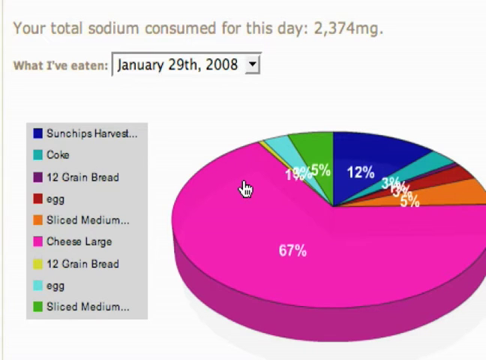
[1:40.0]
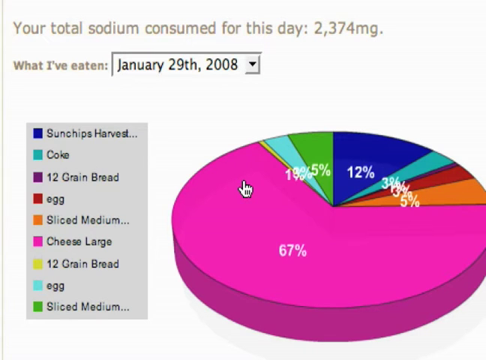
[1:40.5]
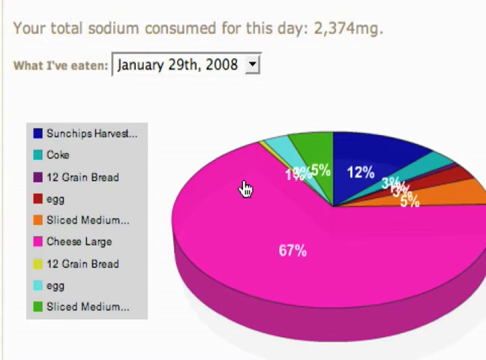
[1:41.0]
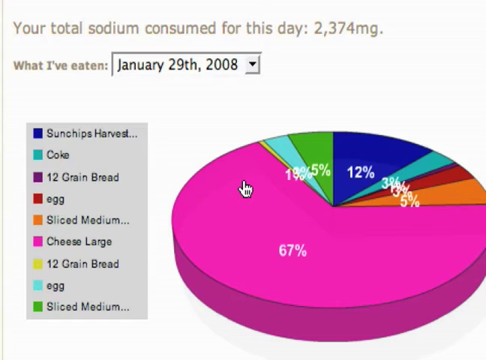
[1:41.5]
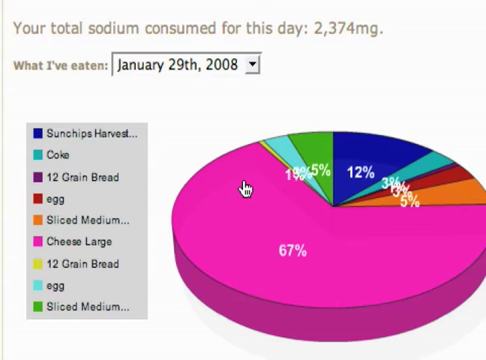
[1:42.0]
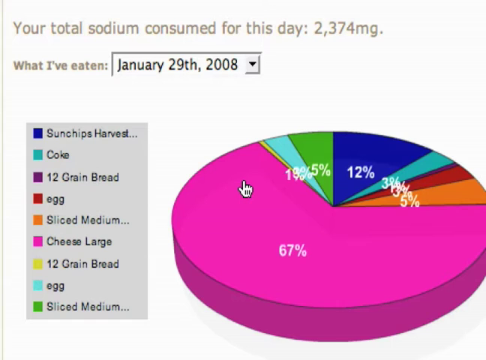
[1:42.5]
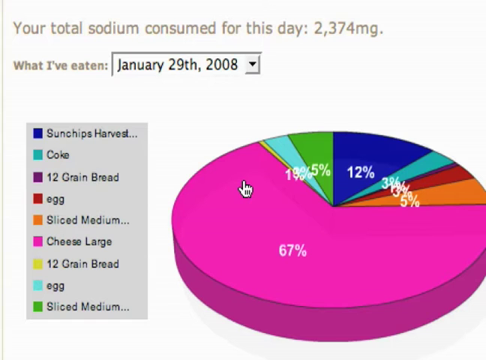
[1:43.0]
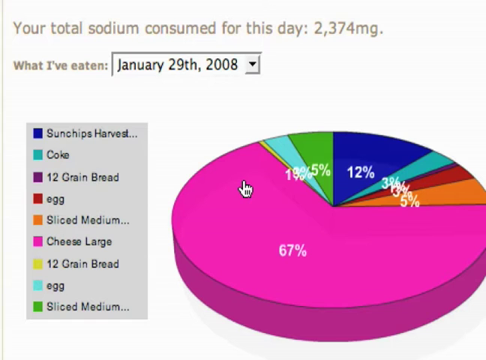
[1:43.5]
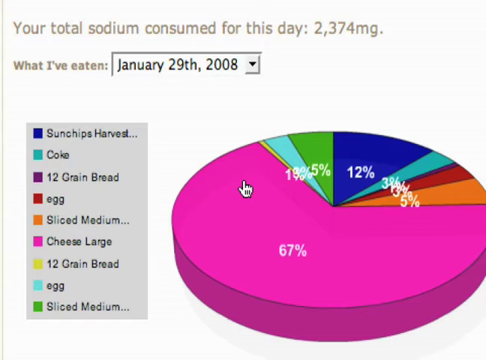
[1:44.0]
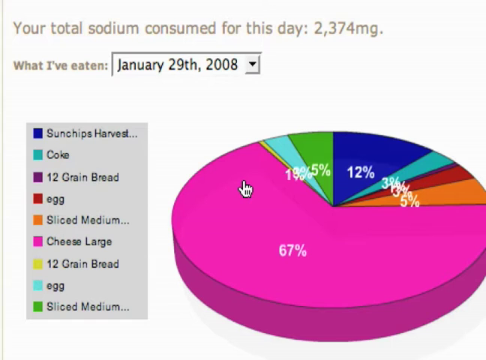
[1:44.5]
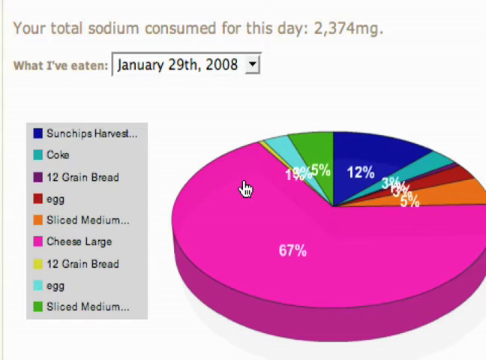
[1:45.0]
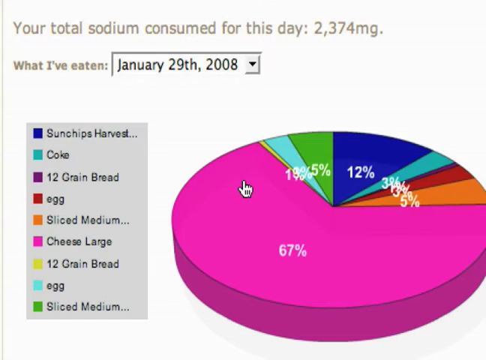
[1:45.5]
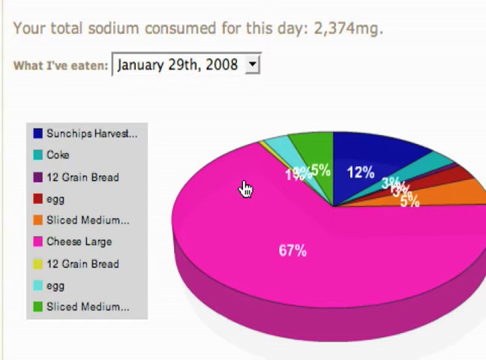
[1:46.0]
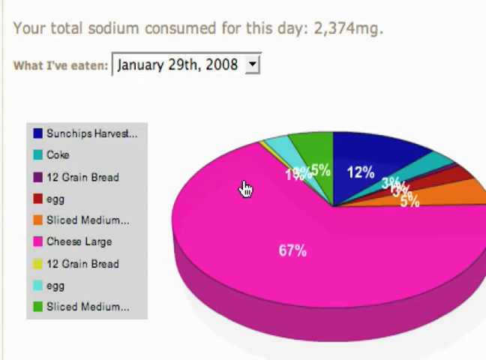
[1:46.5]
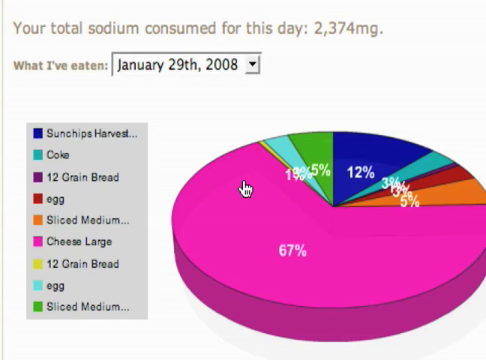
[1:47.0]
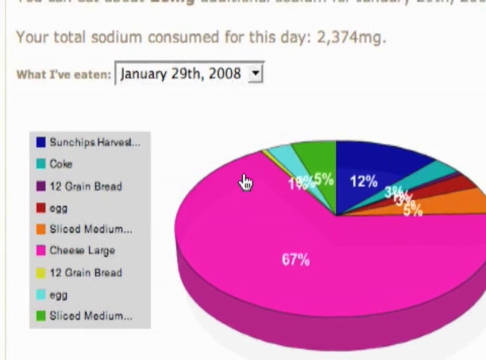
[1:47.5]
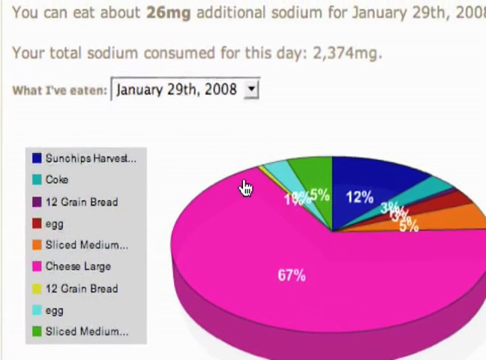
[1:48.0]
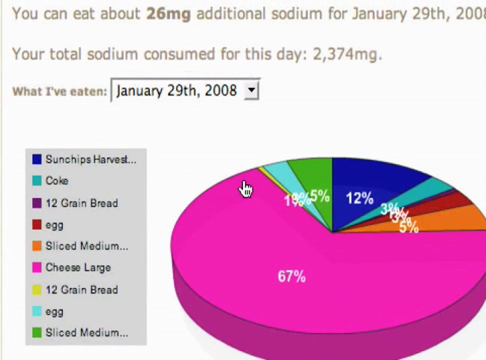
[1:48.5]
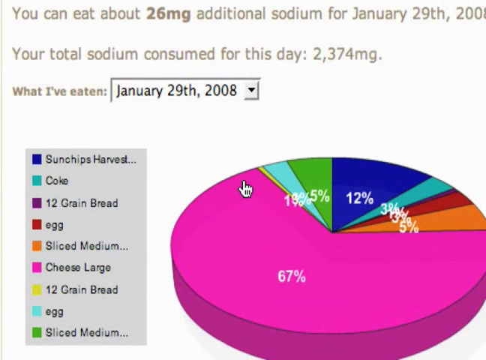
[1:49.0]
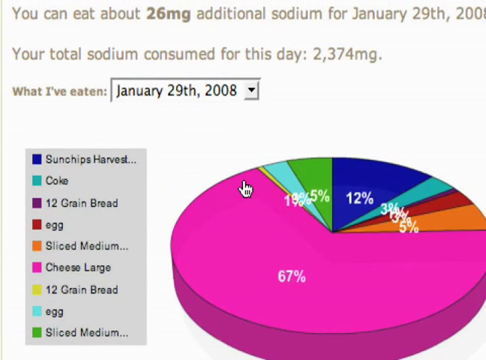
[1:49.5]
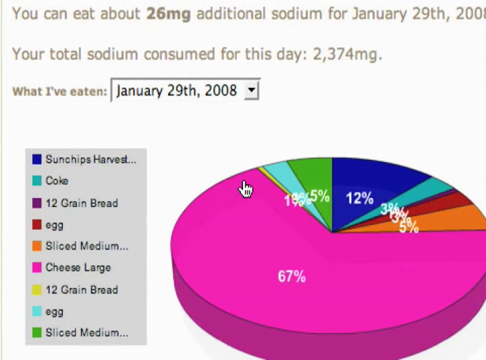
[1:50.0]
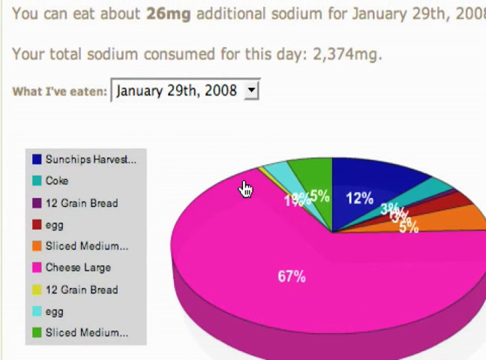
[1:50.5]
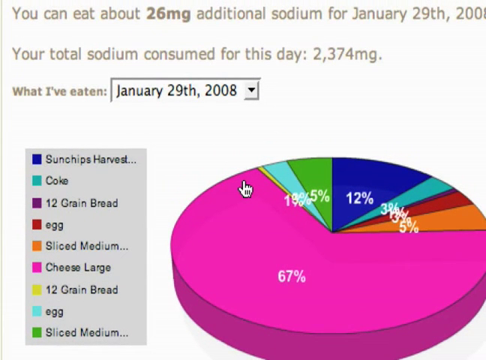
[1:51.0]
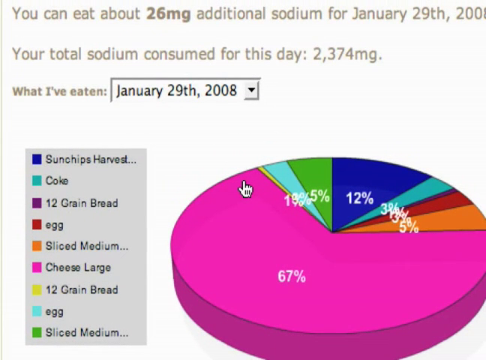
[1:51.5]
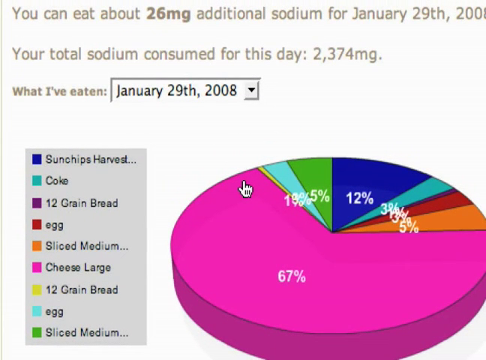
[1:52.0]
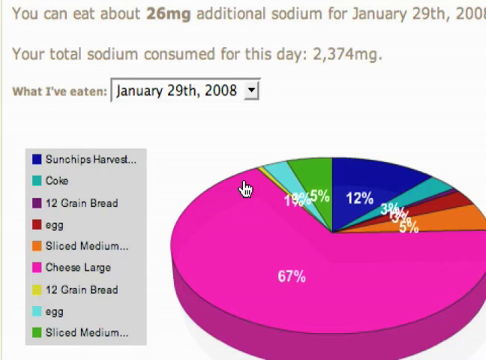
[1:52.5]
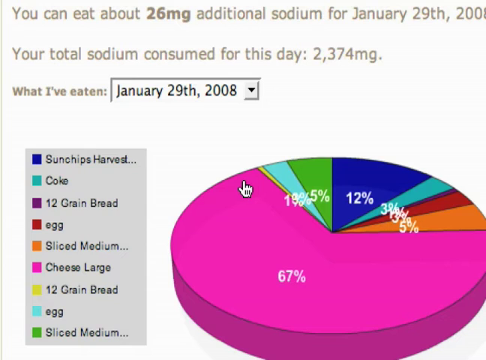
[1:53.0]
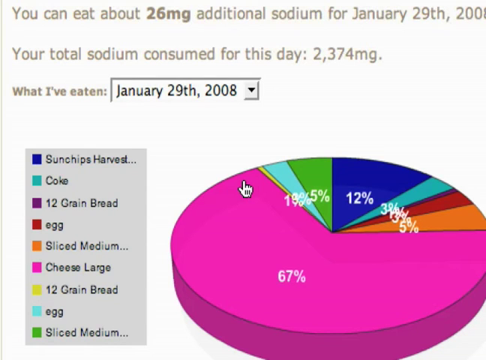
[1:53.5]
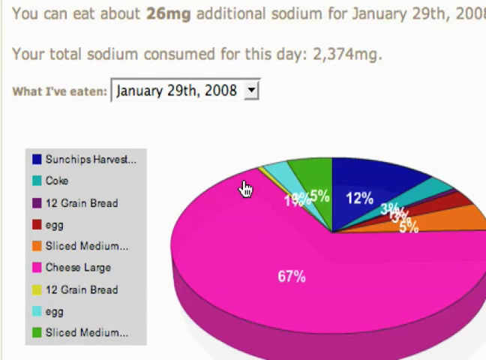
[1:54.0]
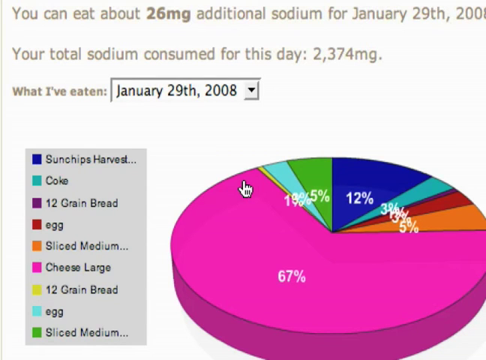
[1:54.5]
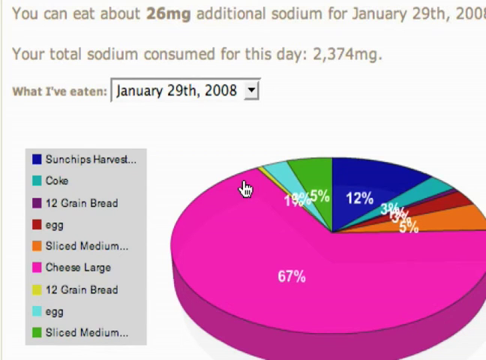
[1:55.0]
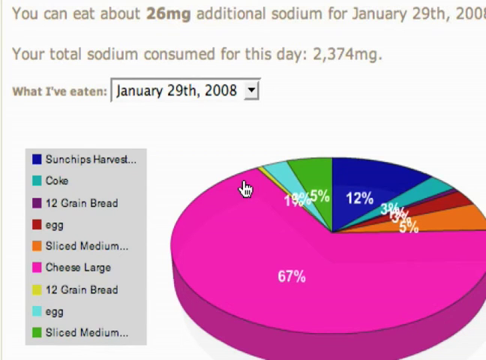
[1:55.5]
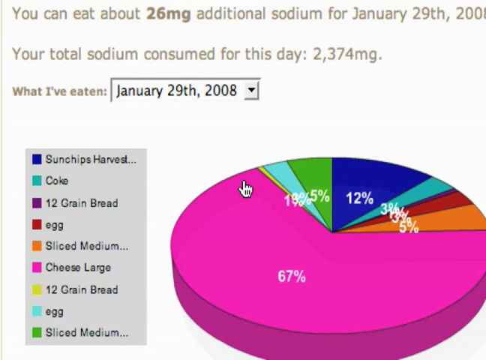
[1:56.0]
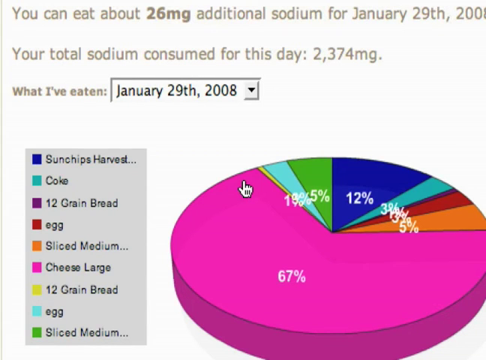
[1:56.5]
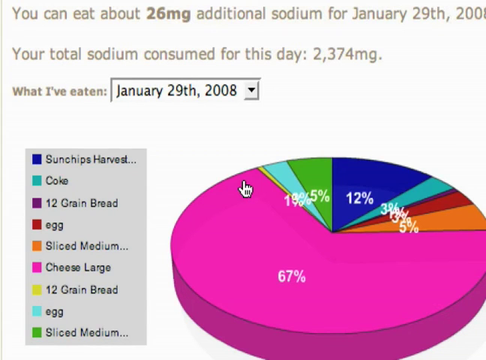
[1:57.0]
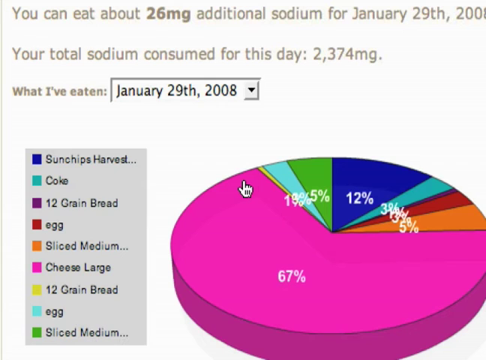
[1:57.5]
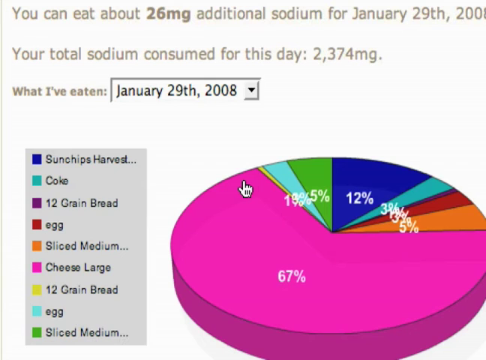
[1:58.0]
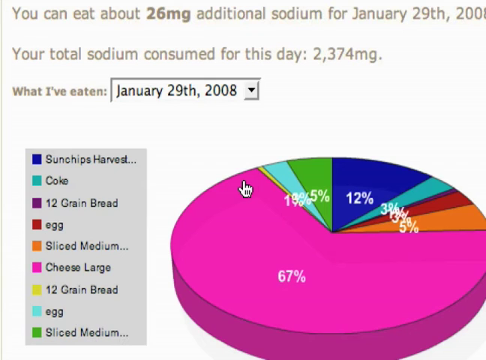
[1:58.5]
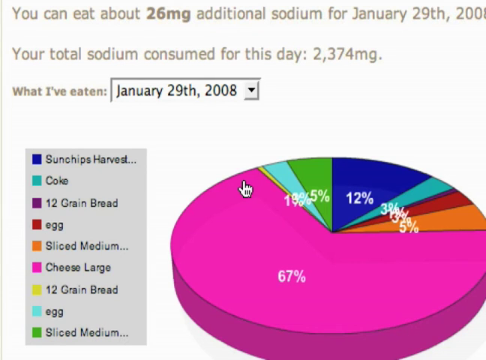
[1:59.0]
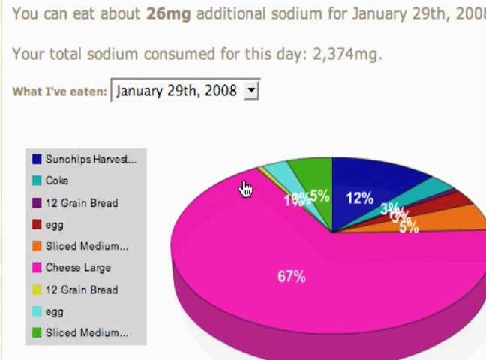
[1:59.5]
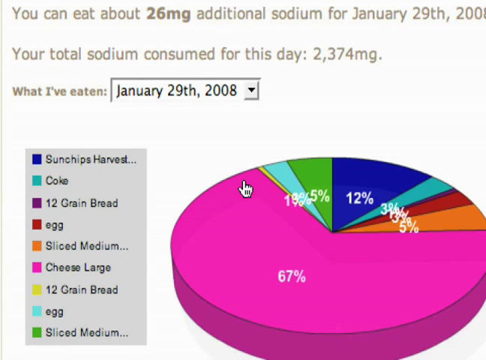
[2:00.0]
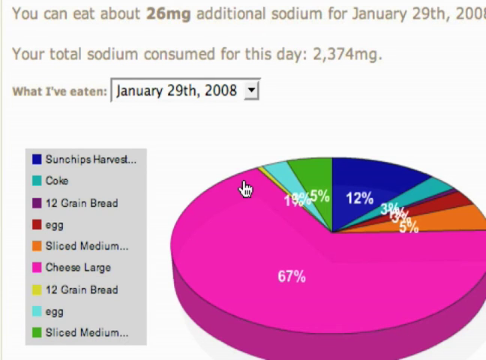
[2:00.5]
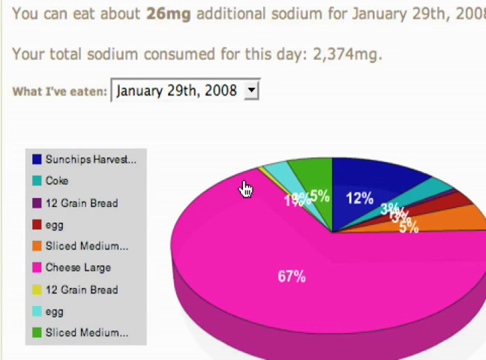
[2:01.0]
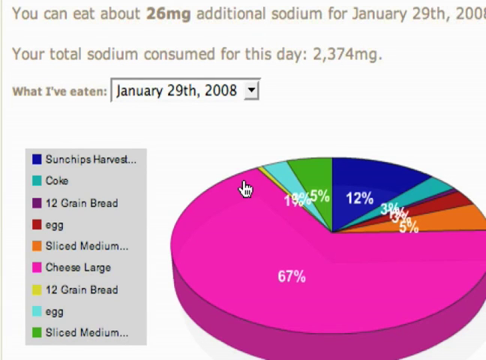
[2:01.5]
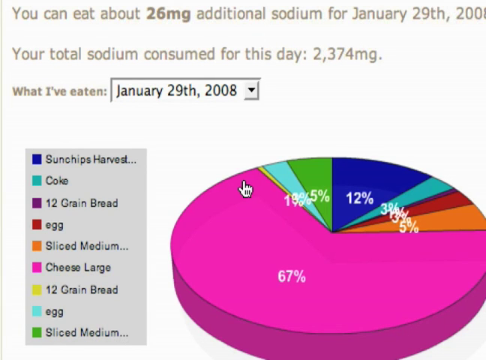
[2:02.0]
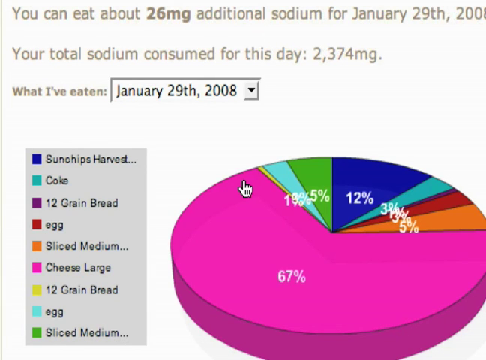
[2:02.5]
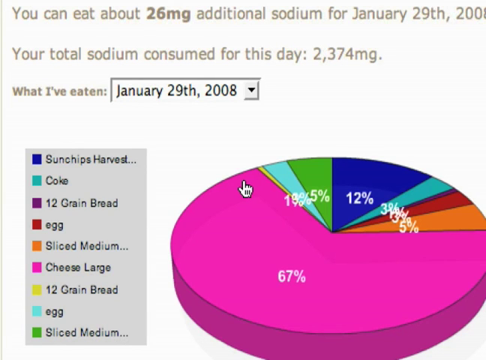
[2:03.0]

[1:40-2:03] The user hovers over a pie chart showing a breakdown of total sodium consumed on January 29th, 2008, totaling 2,374 milligrams. The chart breaks this into components: for example, 67% is large cheese, along with sun chips, two eggs, a Coke, and others. The user slowly sort of hovers over the chart, barely moving the mouse, keeping it still while looking at the amounts for each section, and then looks at the menu on the side detailing the components.